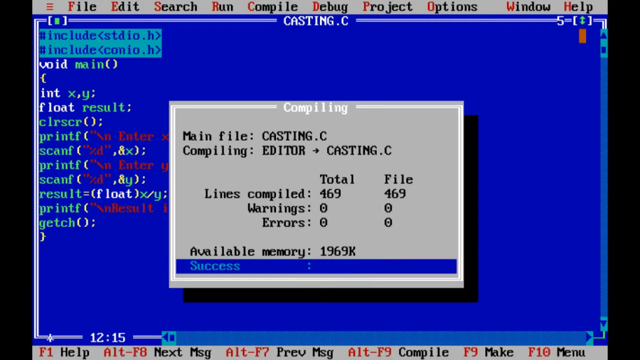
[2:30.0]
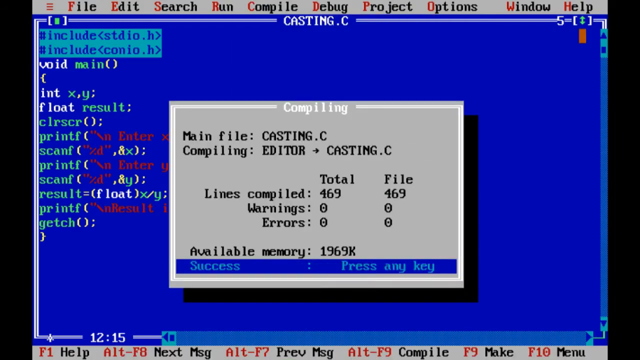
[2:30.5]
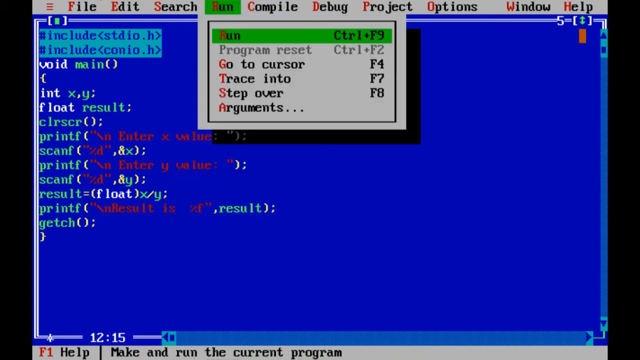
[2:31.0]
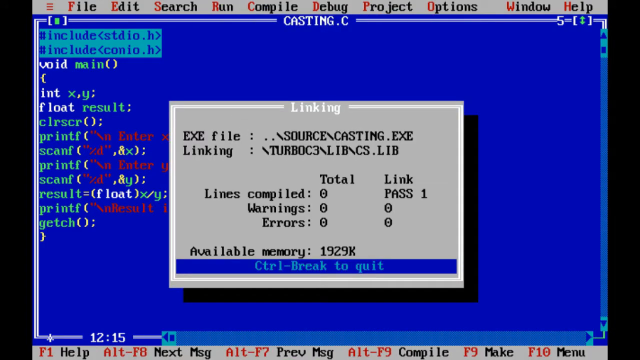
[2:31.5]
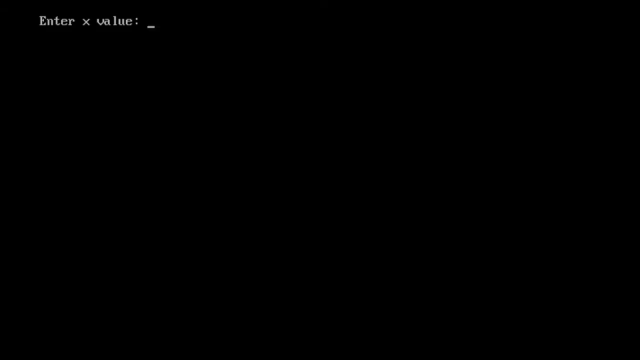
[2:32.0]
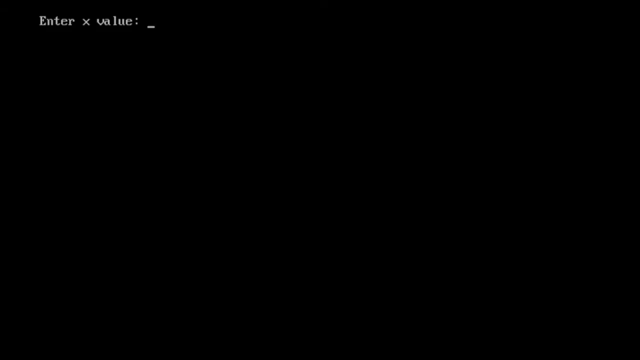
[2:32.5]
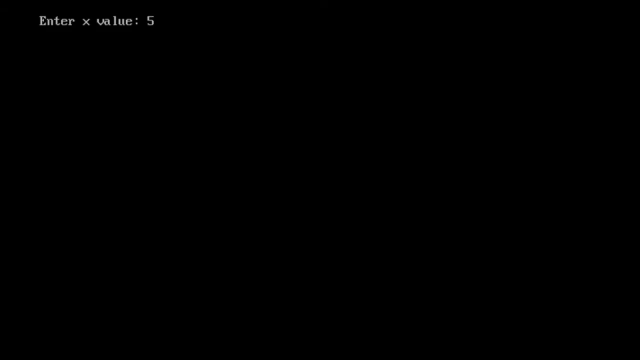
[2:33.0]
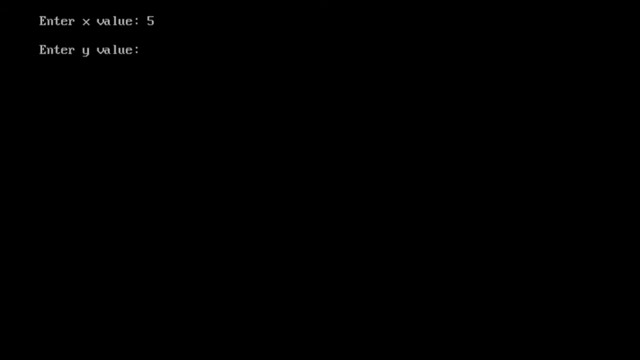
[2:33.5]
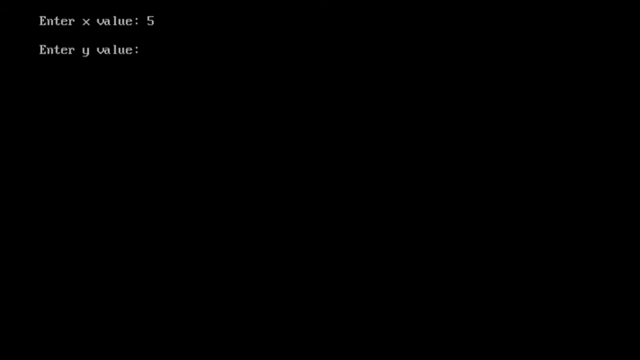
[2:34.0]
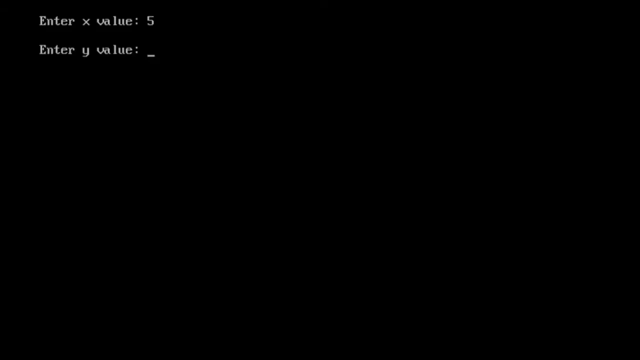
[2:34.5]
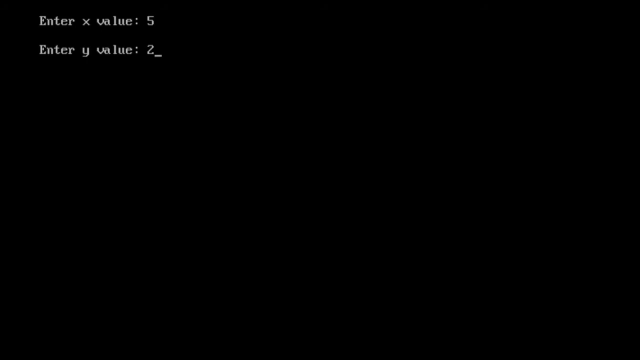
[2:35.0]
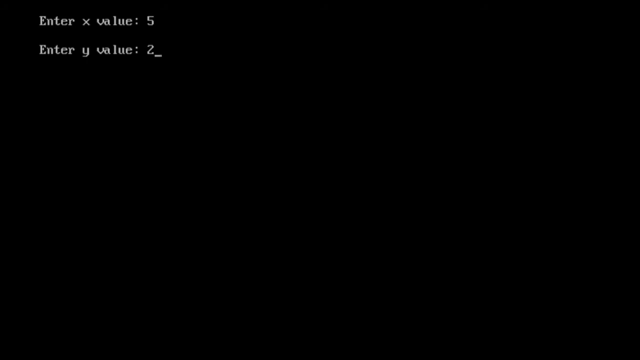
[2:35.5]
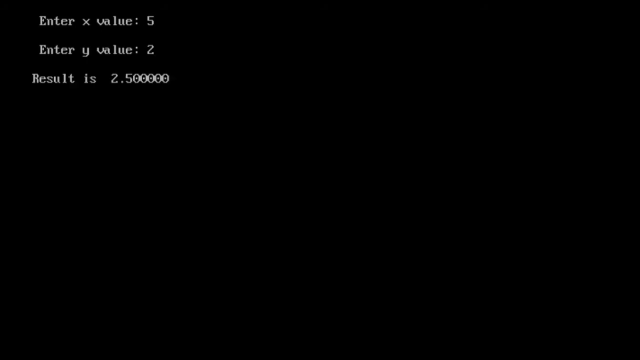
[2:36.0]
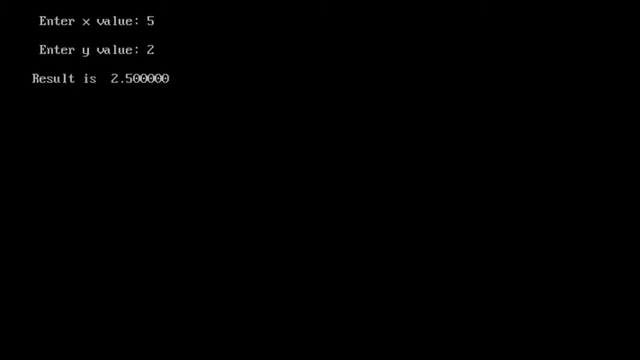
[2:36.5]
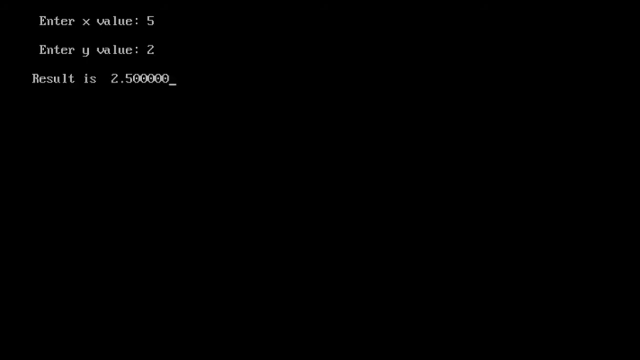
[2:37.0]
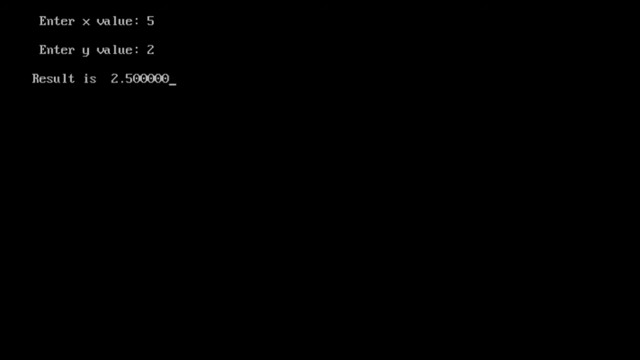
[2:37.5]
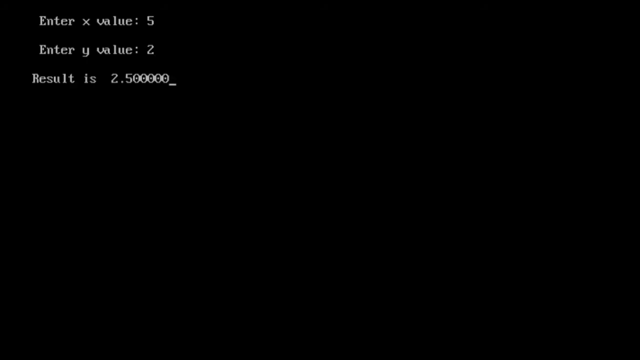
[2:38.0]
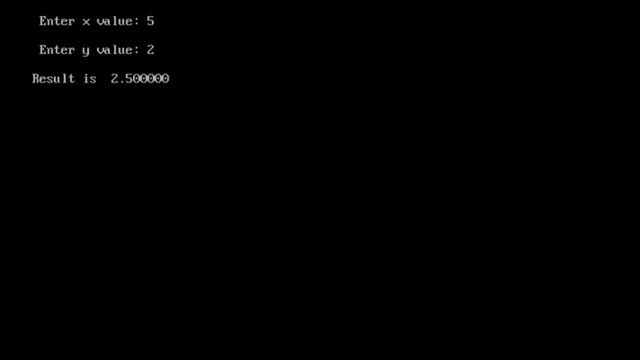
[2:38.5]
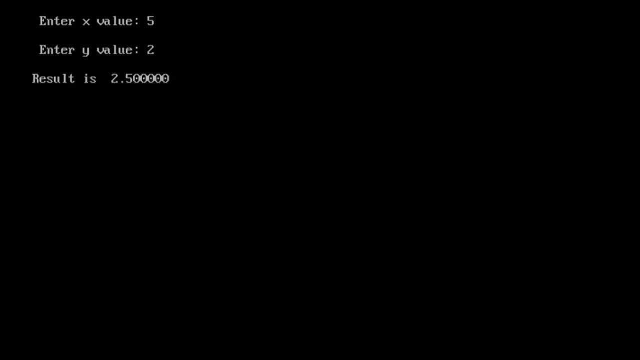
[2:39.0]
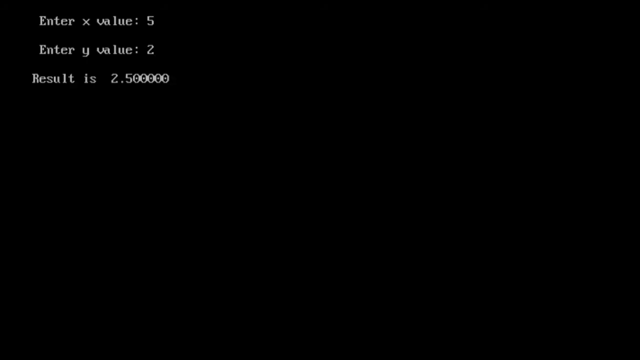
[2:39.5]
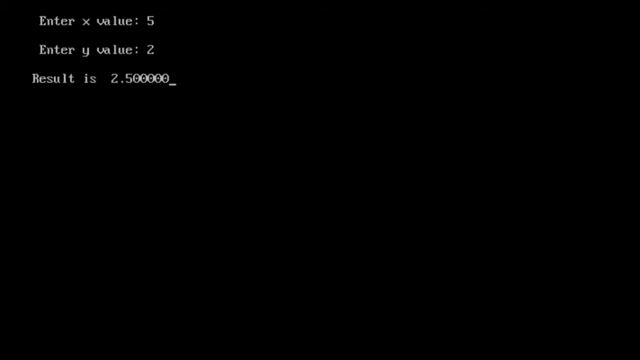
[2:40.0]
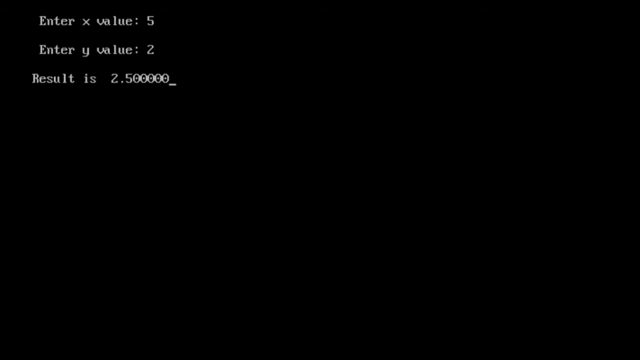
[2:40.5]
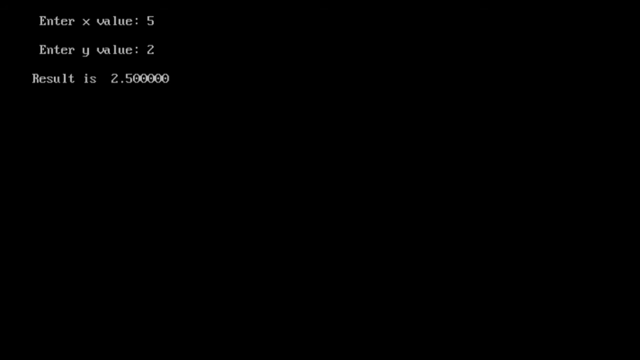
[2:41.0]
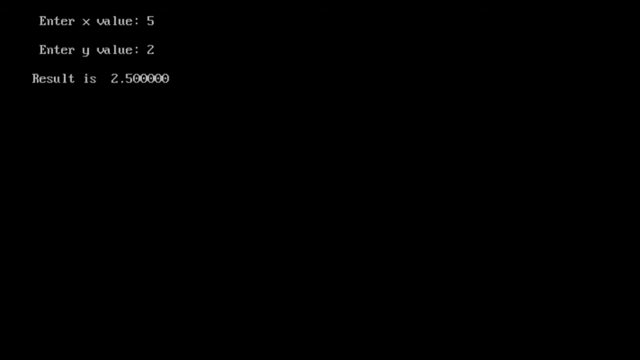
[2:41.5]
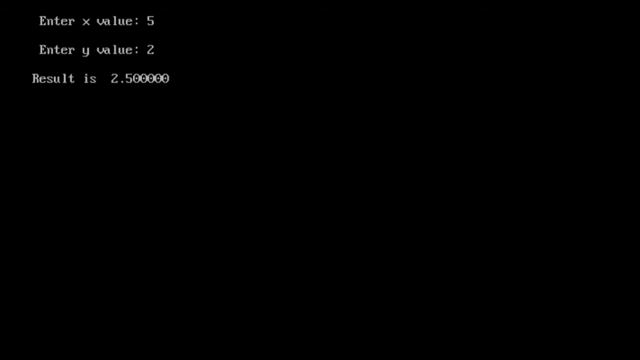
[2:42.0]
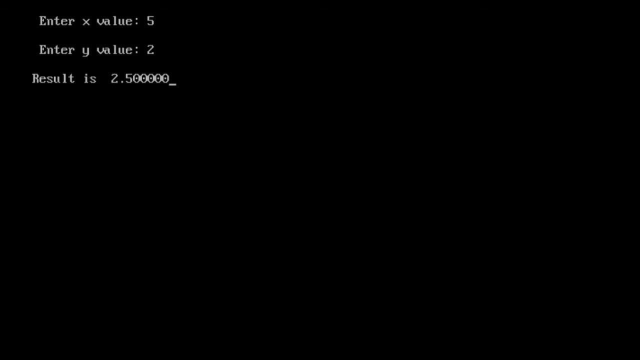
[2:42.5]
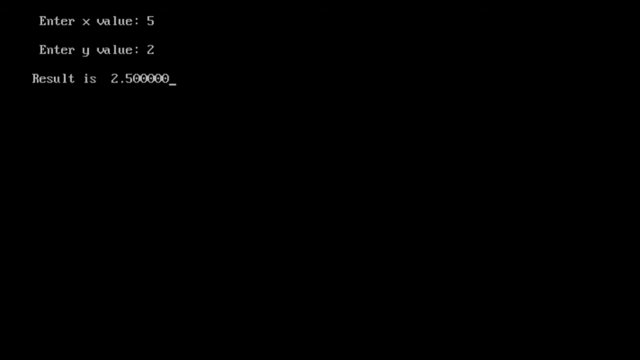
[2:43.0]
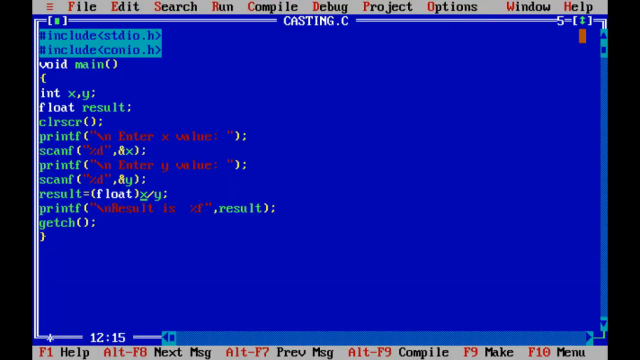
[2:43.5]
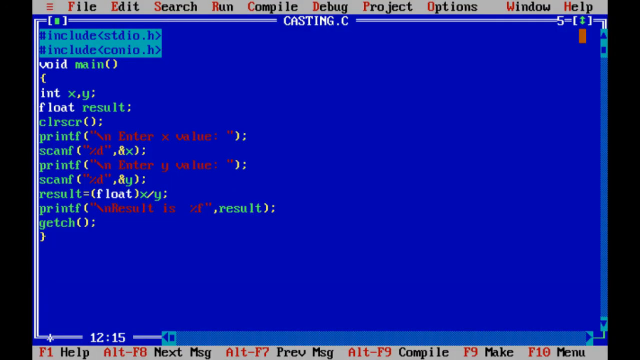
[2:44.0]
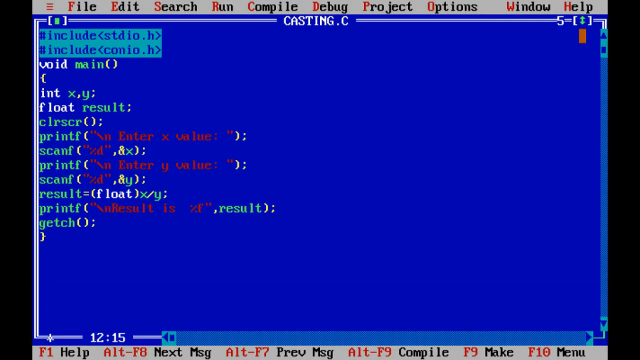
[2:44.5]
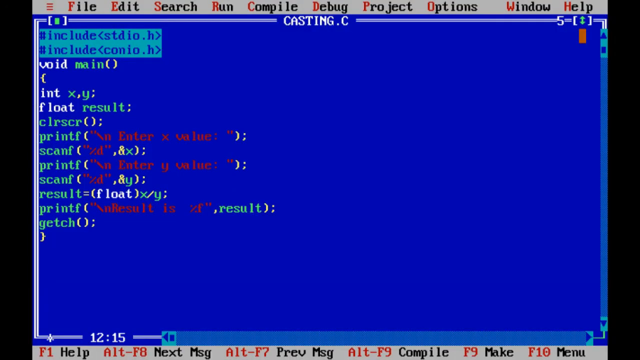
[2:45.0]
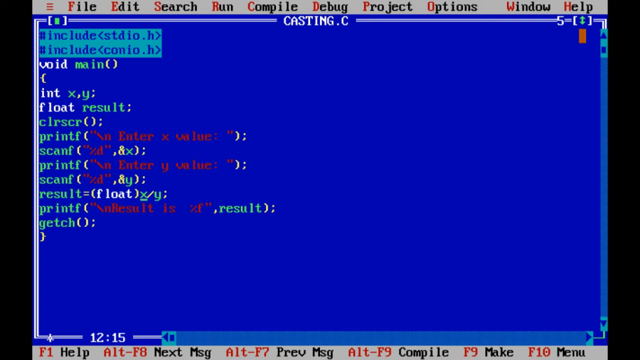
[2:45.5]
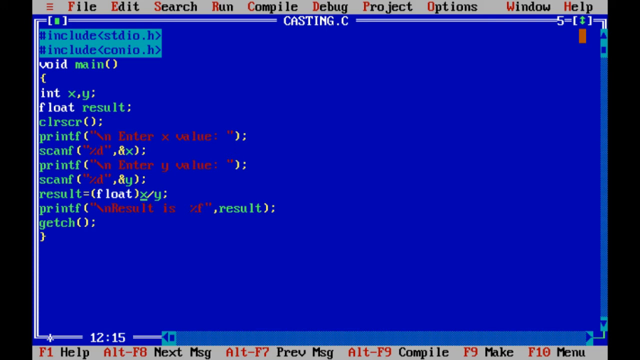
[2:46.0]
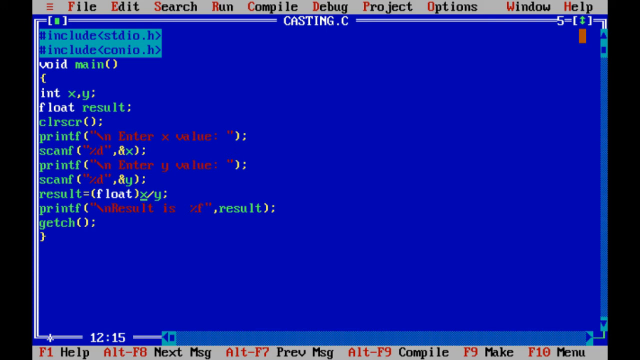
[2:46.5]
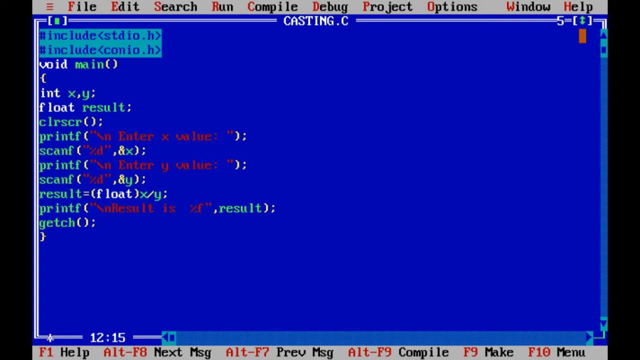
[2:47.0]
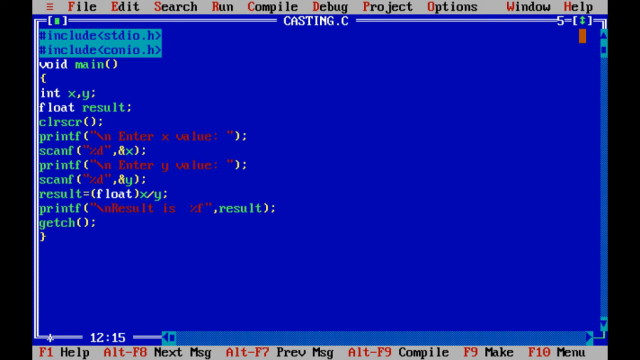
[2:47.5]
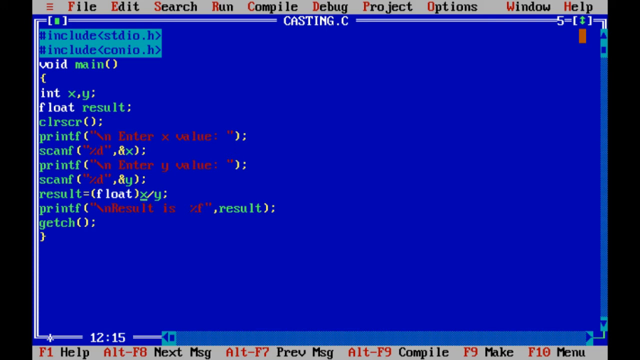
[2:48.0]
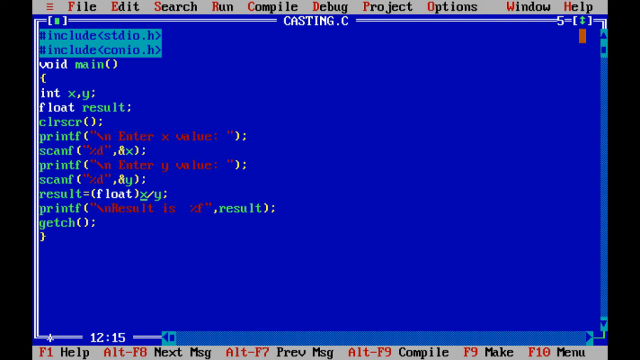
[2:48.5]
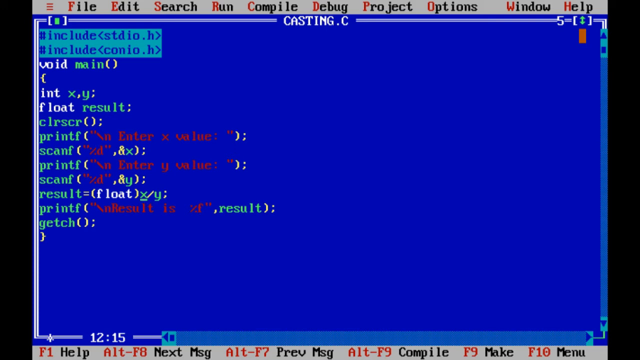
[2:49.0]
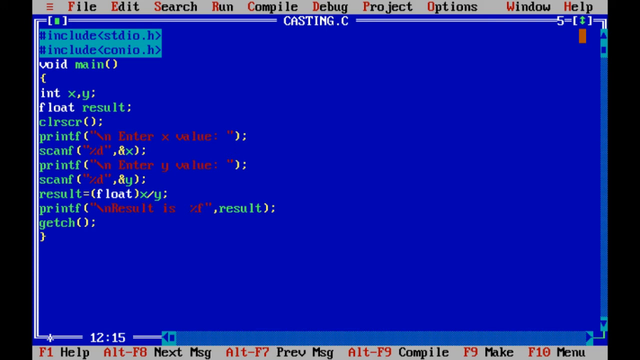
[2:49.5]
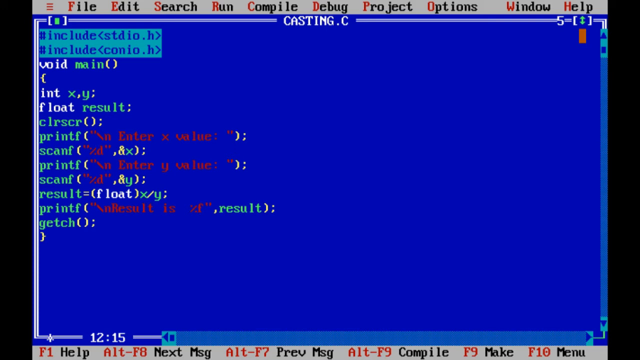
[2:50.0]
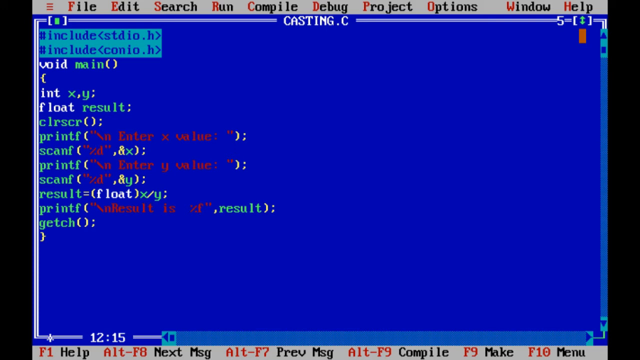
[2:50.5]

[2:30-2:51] An IDE is loaded on a computer screen, with a blue main window holding about 13 lines of code that create a function. A smaller grey window titled "Compiling" overlays it, showing the main file, "casting.c", the compiling program, the total lines compiled, warnings and errors, and available memory of "1,969 K". At the bottom, highlighted blue text says "Success". A couple of other screens then flash by too quickly to read before the view switches to a black screen, the live testing environment. White text in the top left corner reads "Enter x value:" and the integer 5 is typed; a new line reads "Enter y value:" and the integer 2 is entered; a third and final line reads "Result is 2.50000". The screen then returns to the development environment, which holds for a few seconds before the video ends.